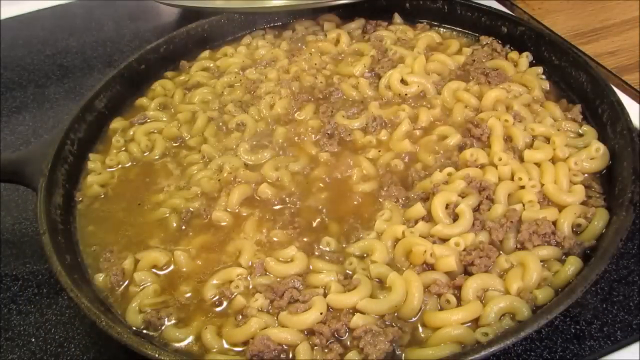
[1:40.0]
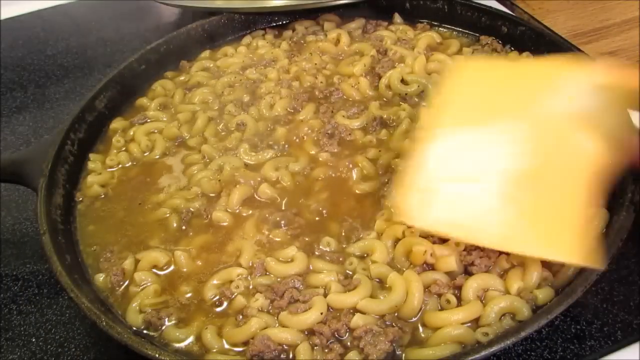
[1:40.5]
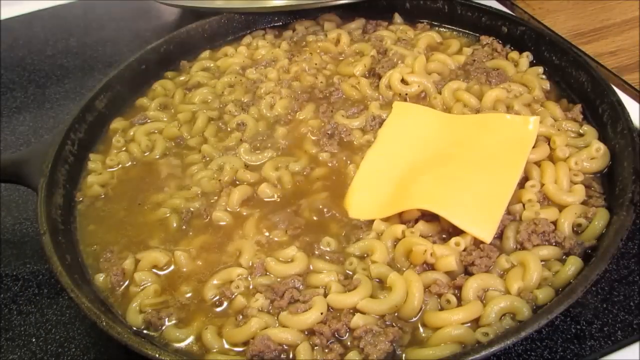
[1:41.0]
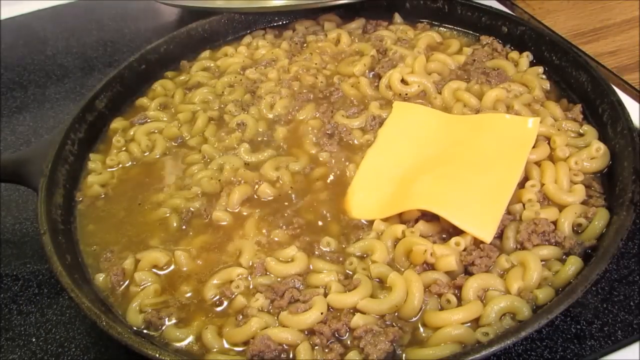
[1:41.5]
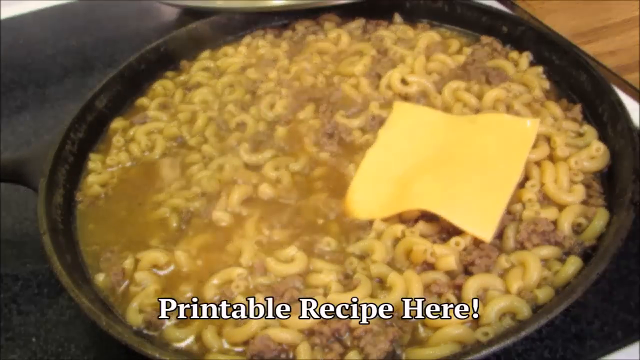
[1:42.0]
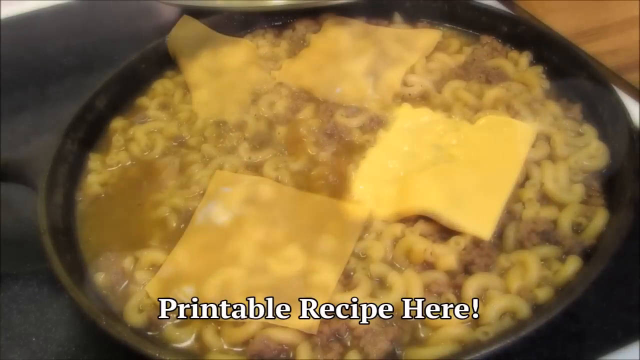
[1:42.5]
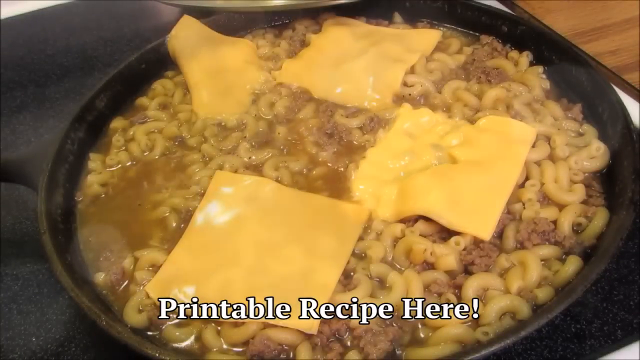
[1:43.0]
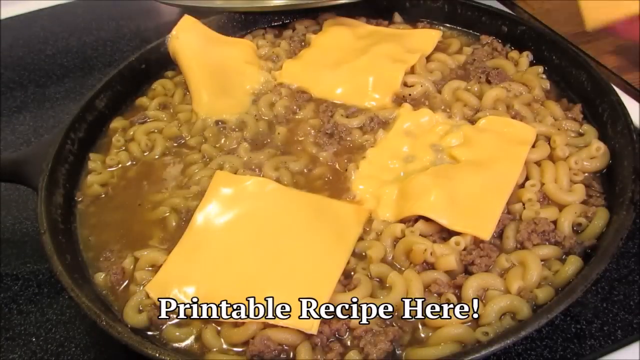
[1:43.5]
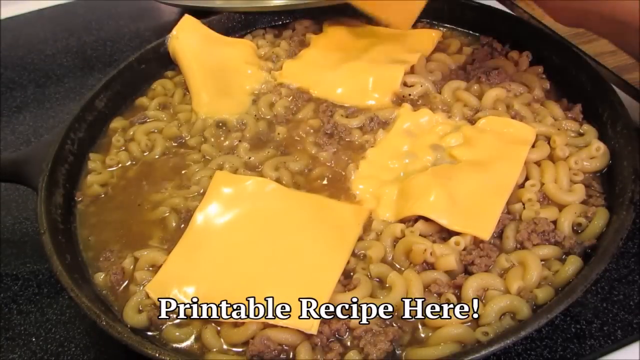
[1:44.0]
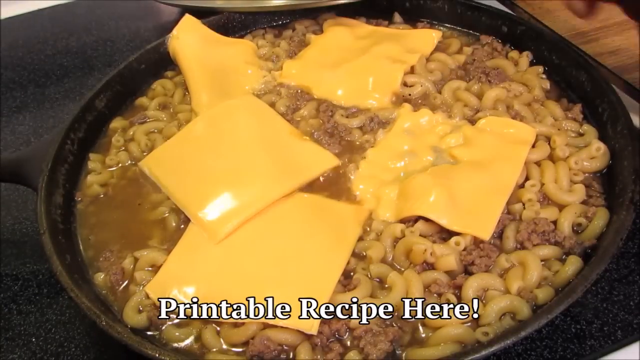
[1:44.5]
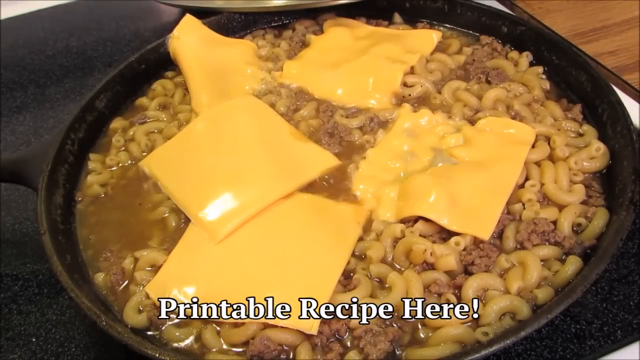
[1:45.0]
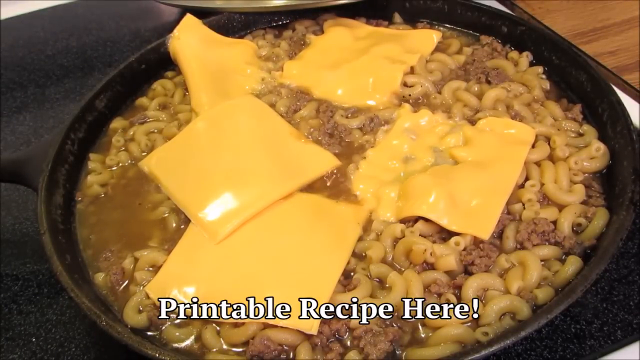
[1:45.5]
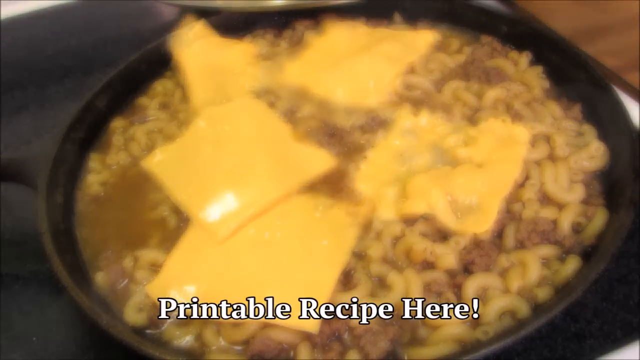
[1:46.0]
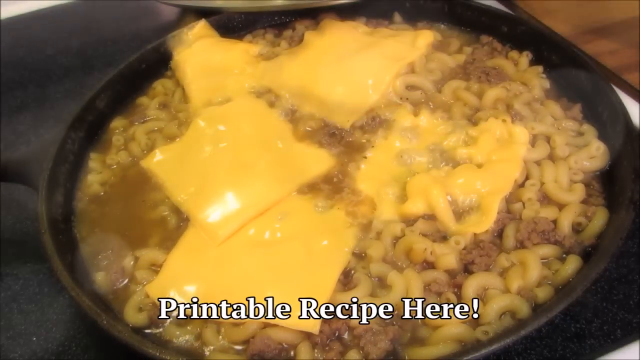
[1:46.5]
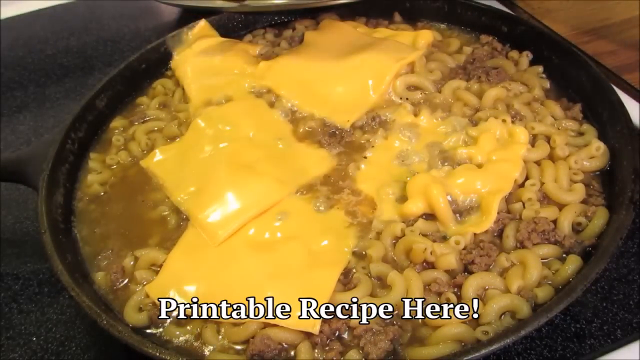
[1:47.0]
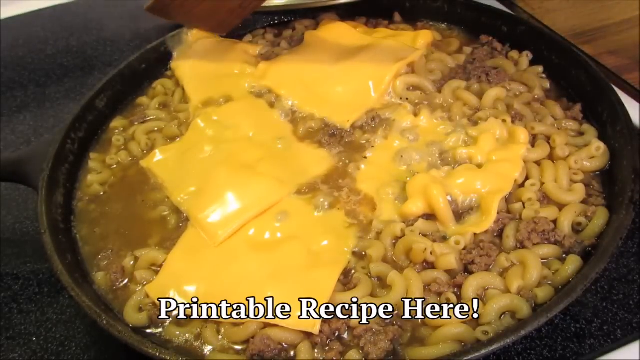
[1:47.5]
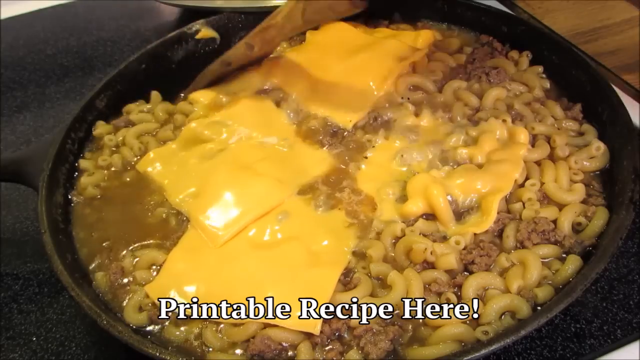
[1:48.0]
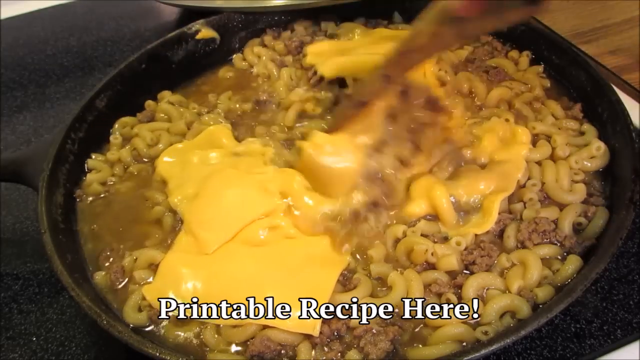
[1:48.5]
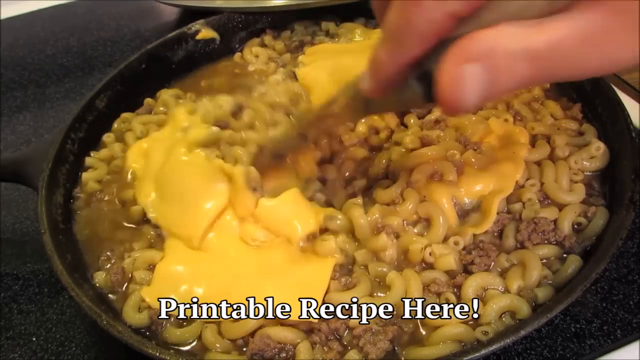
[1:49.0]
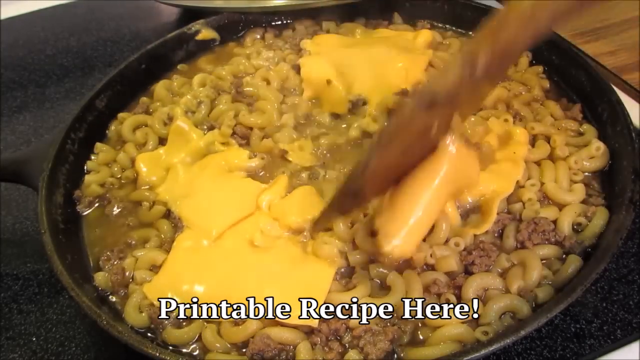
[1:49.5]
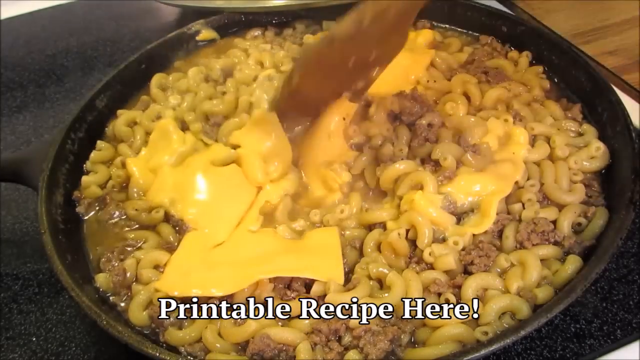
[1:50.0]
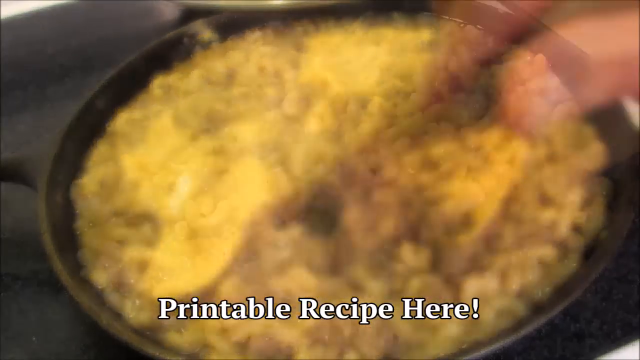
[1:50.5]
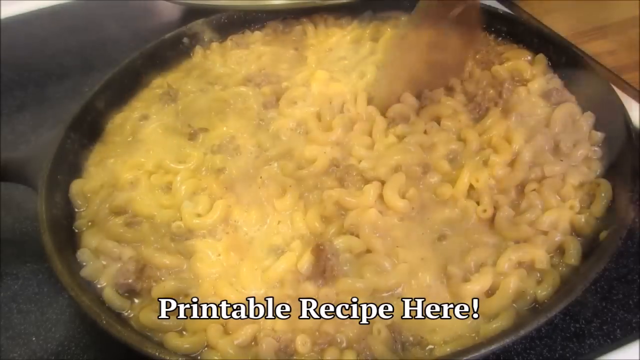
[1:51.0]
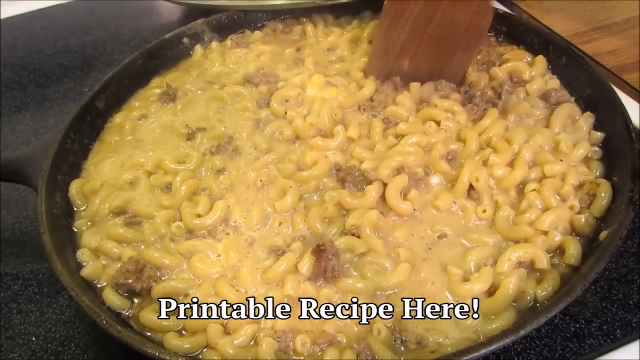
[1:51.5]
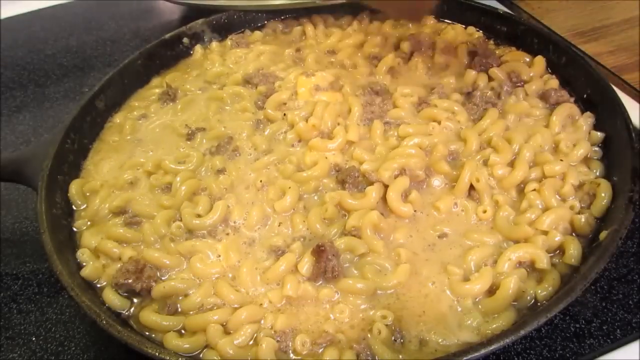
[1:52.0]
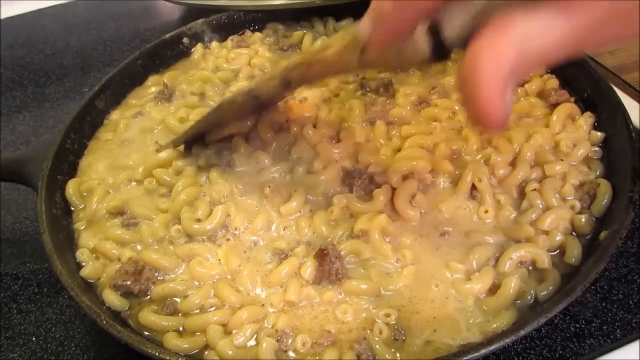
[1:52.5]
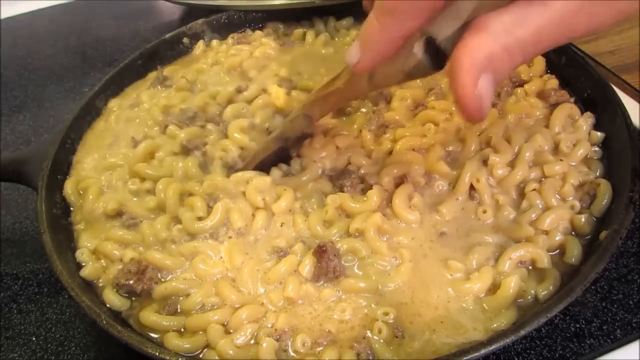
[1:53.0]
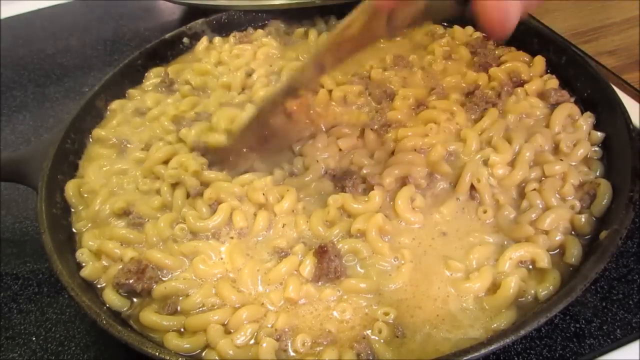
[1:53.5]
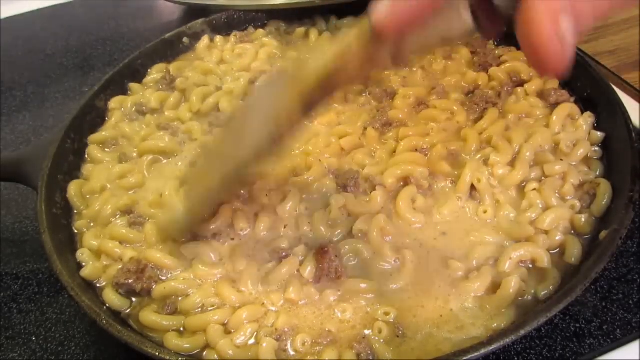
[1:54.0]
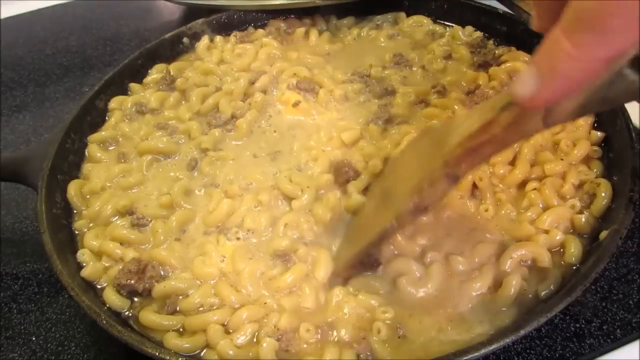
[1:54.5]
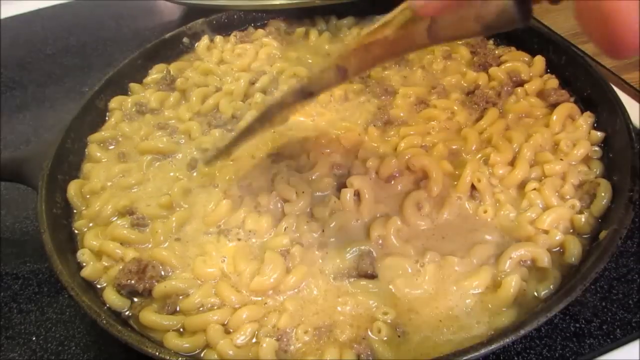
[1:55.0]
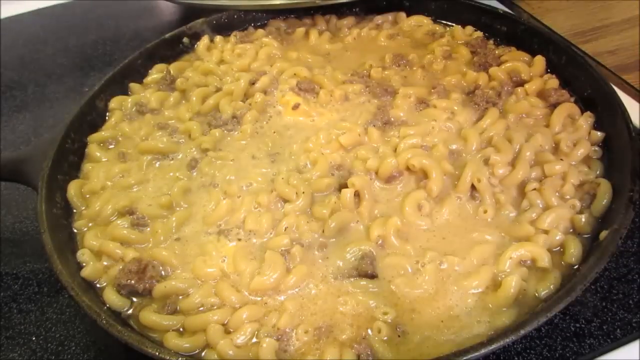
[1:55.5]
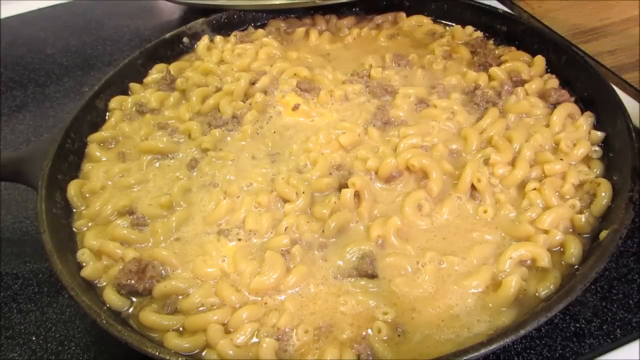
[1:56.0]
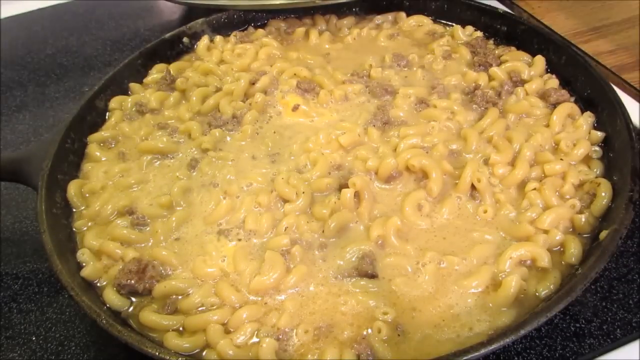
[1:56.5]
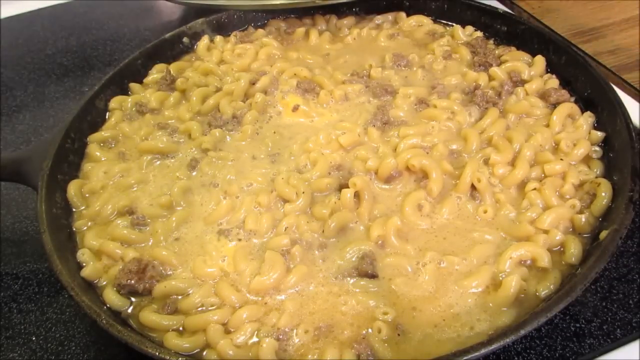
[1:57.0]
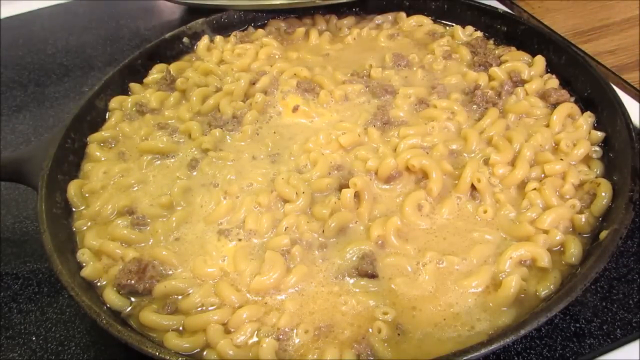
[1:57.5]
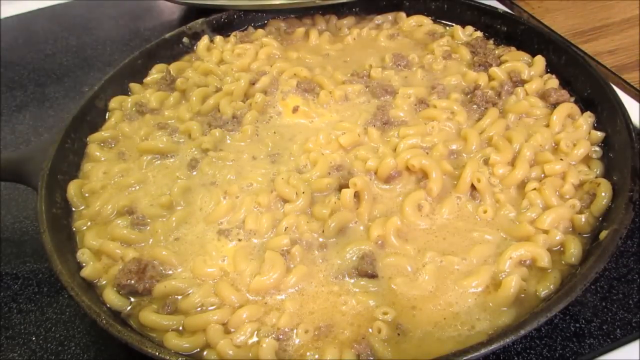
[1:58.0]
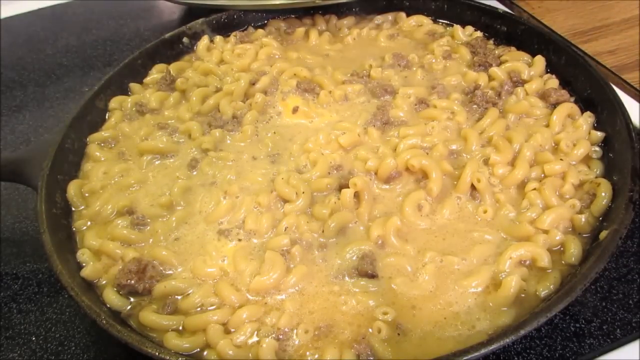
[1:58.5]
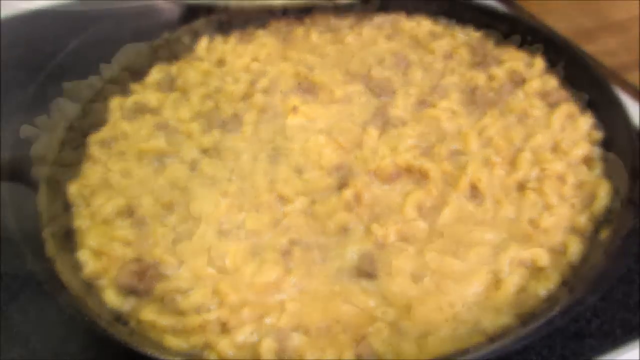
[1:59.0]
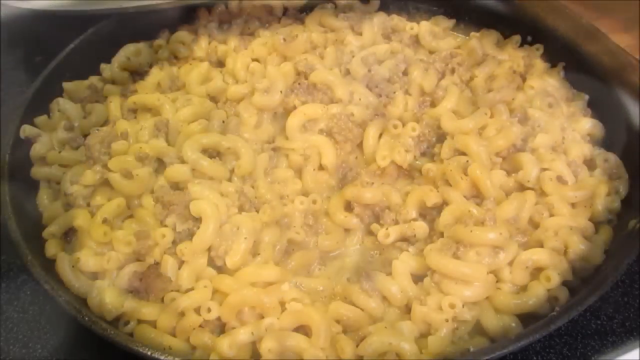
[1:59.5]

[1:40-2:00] The macaroni is well mixed, the water is almost gone, and it has become a well-mixed sauce. While mixing and checking the consistency, the cook puts the wooden spatula down on the side and places about four slices of cheese on top, letting them melt. After they melt, the wooden spatula is used again to mix, and the cheese is melted well into the macaroni and the sauce. The pan is shaken and left to simmer a little. White text reading "printable recipe here!" flashes on screen and is then removed. The food looks thick and almost ready to serve.